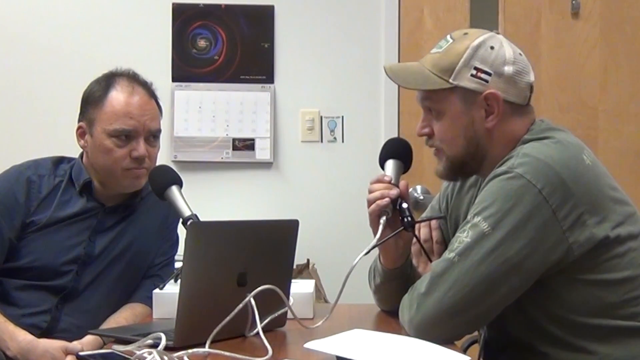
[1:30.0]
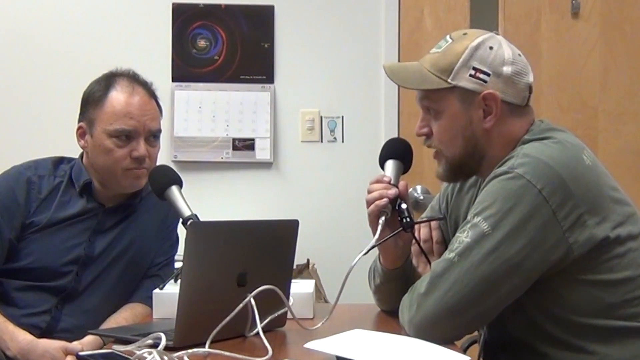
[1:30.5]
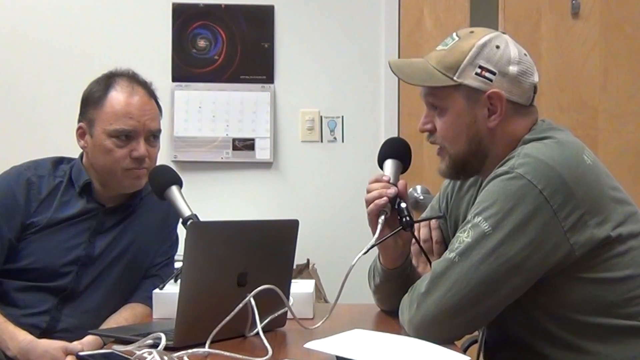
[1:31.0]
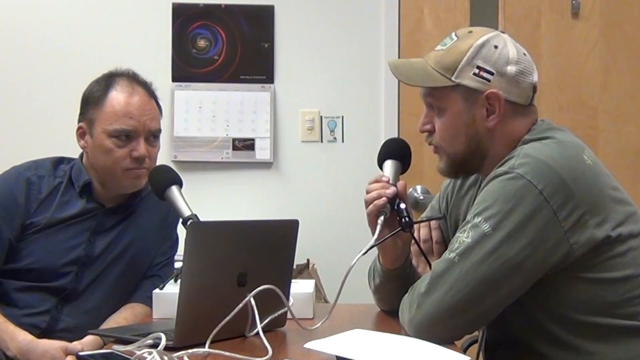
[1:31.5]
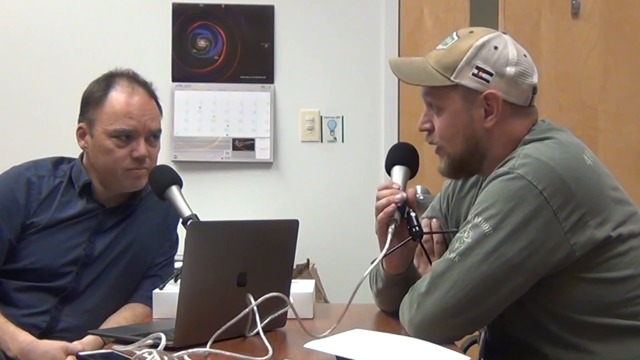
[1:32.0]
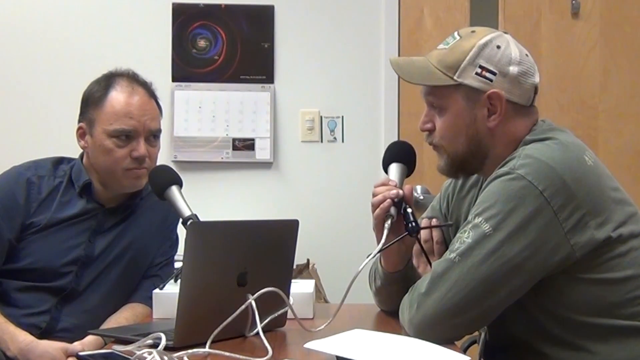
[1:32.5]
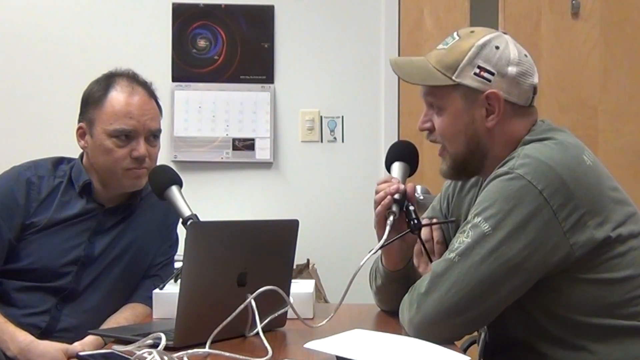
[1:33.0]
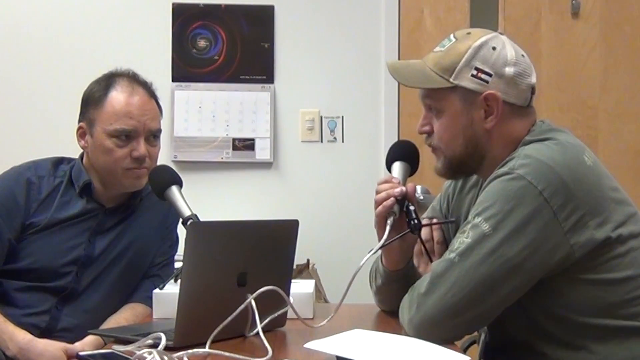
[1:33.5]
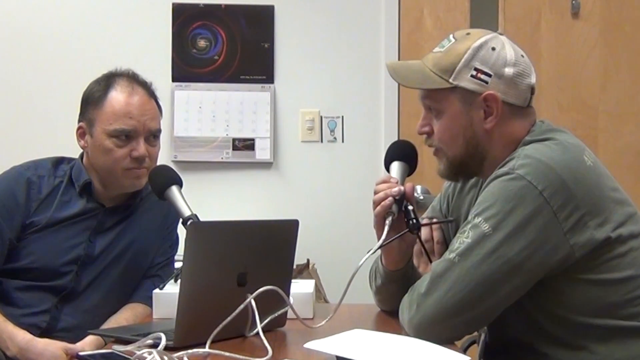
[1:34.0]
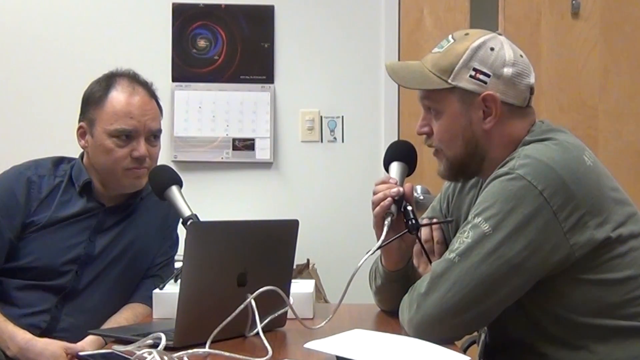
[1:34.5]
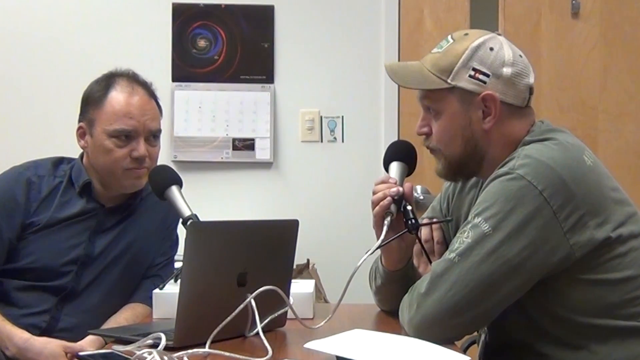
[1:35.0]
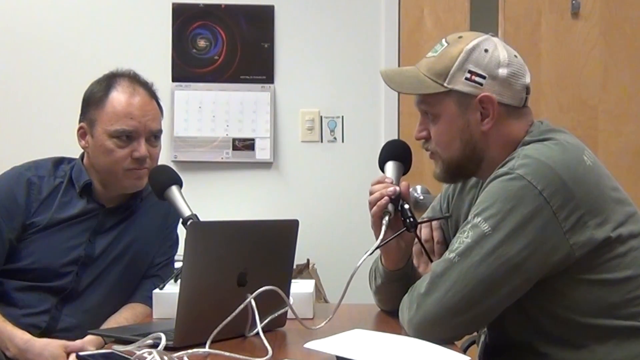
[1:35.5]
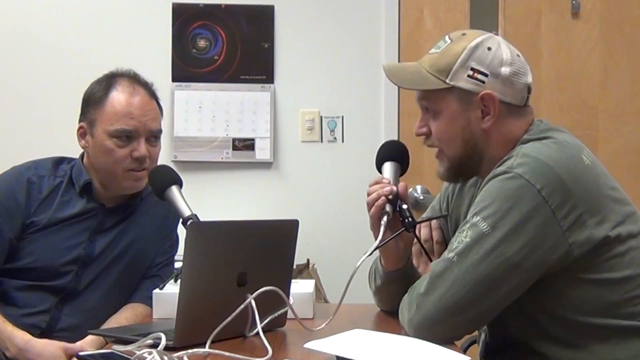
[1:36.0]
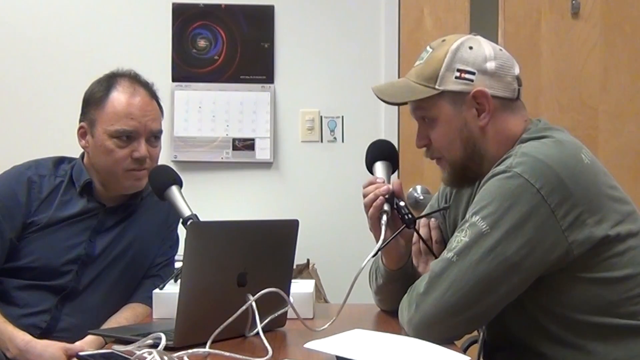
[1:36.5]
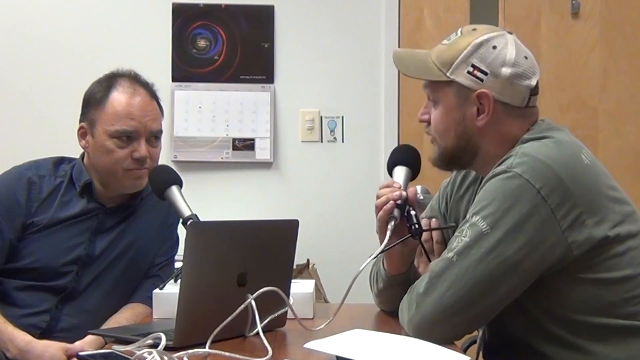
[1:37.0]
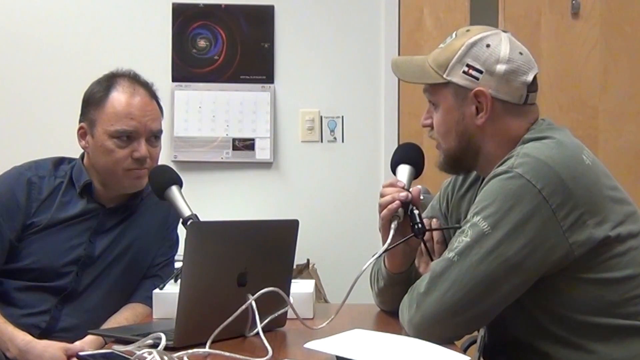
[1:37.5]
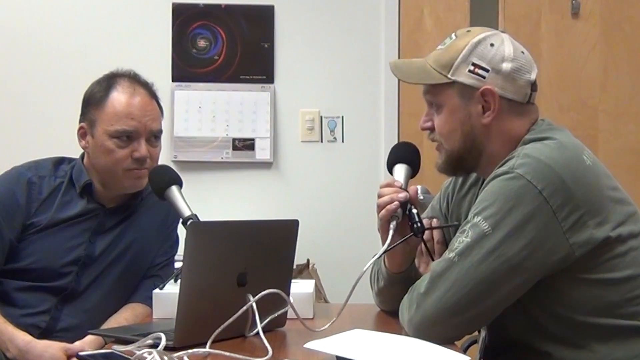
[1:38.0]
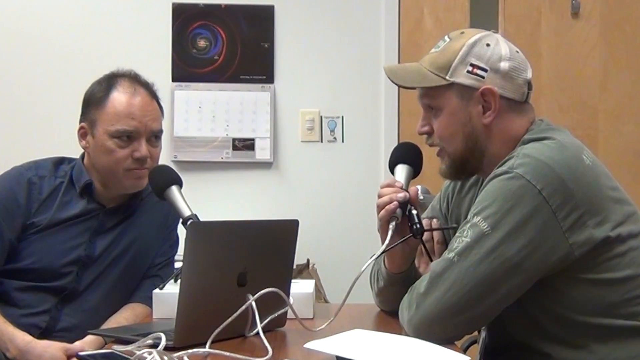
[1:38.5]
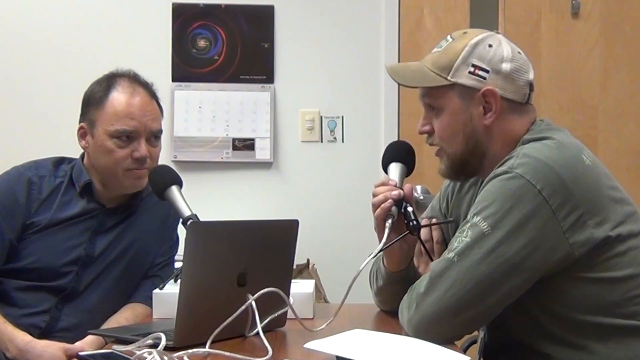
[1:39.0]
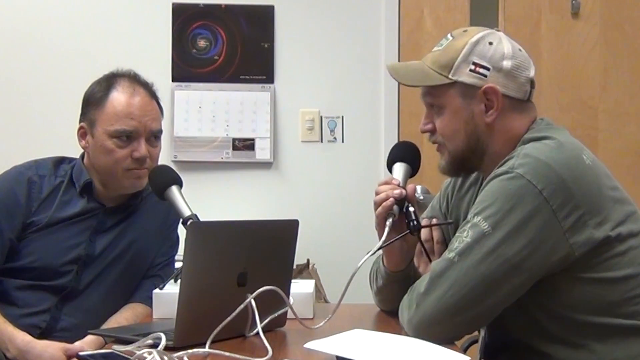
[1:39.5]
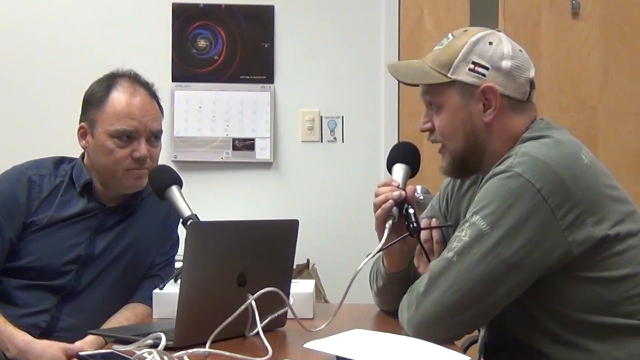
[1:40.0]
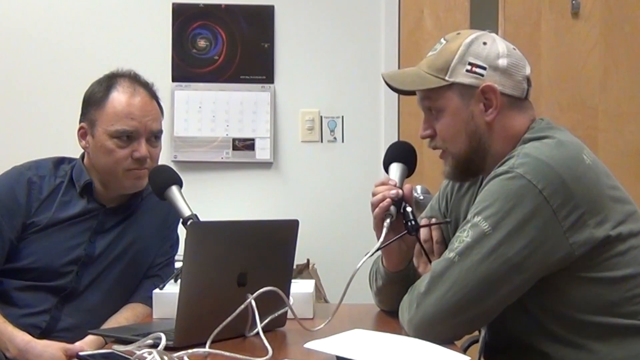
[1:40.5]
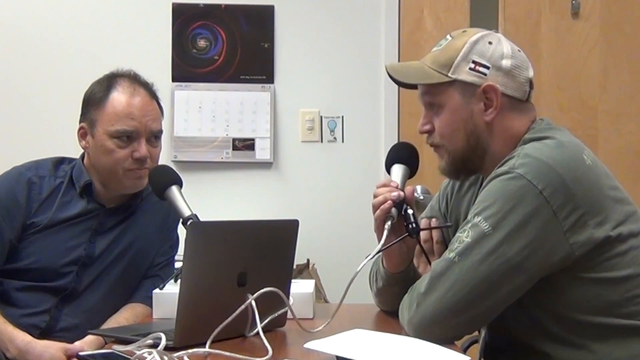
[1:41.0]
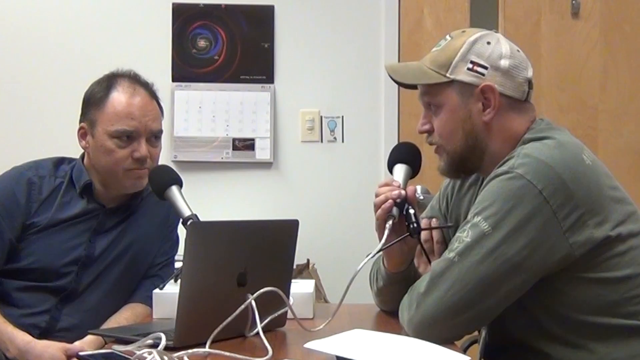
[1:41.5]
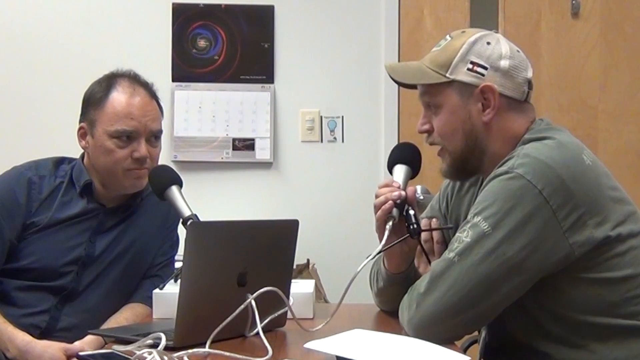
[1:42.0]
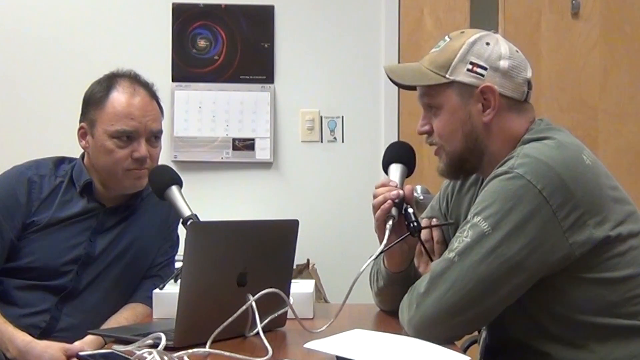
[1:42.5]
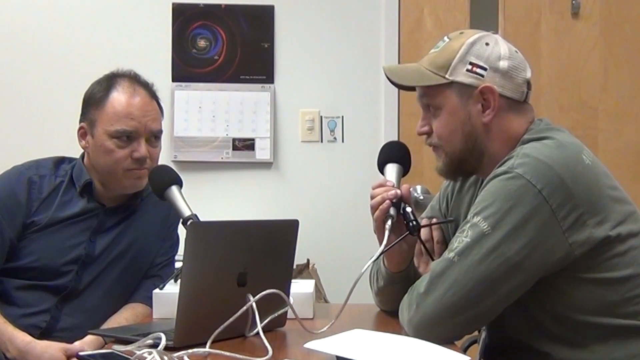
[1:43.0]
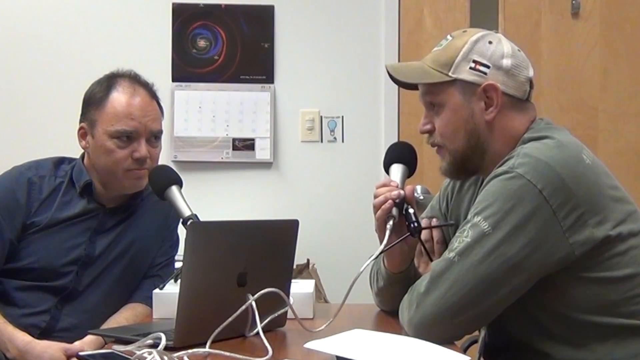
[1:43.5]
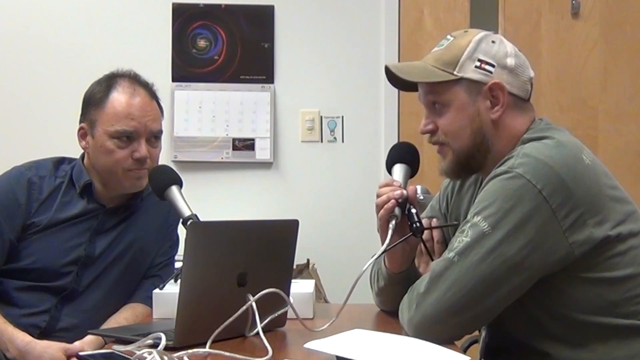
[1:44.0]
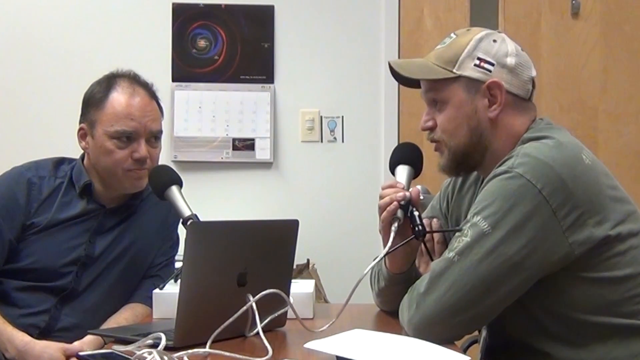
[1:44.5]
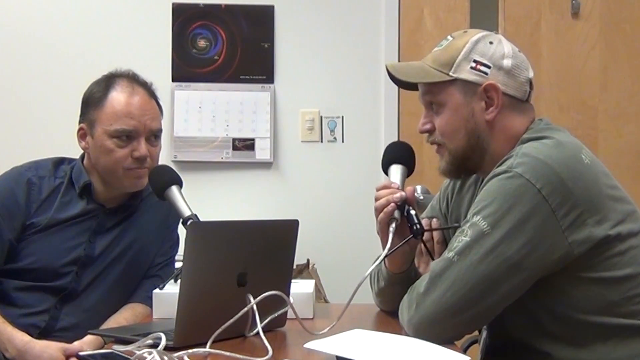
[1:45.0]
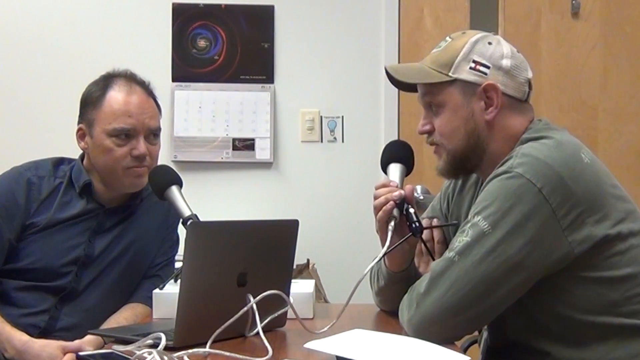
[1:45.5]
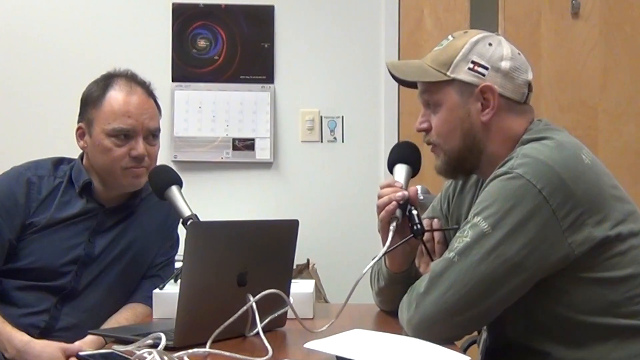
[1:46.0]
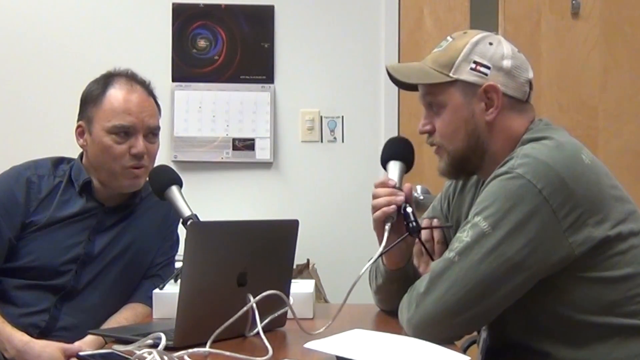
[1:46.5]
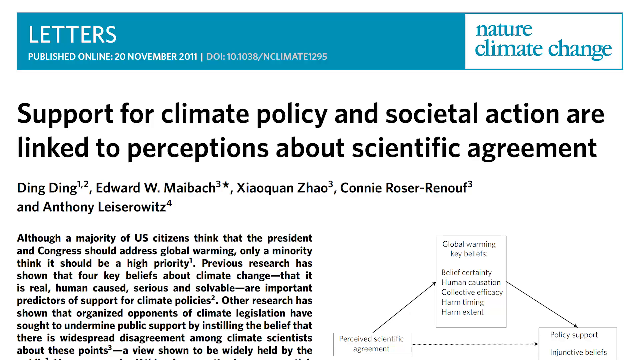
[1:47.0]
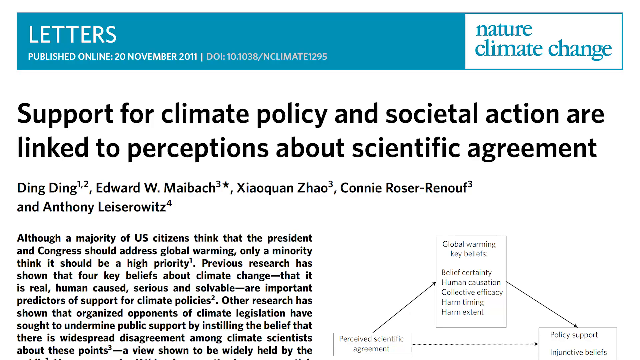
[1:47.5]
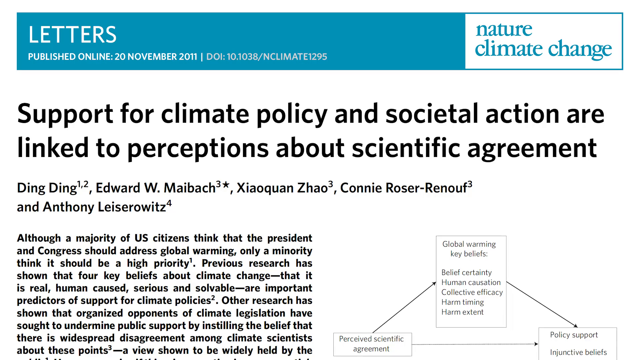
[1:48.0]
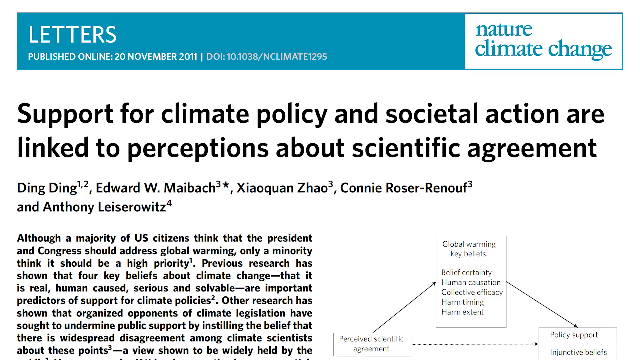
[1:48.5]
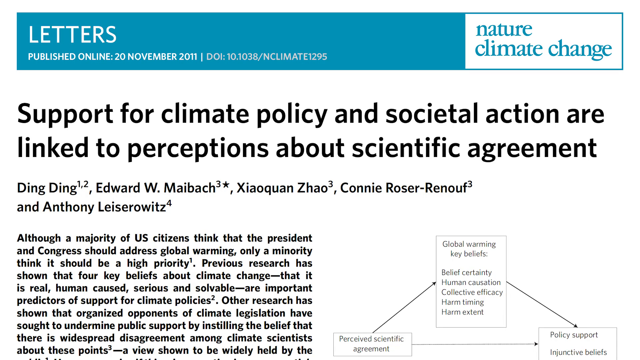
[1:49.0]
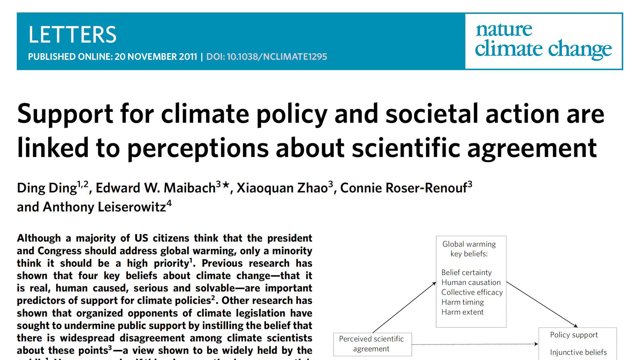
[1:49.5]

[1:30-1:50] On the left, a man in his mid to late 40s with receding dark hair, dark eyes, and a blue button-down shirt has a microphone and an open laptop in front of him. The man on the viewer's right is a little younger, in his late 20s, maybe early 30s, wearing a brown and white baseball cap and a long-sleeved green shirt; he holds his microphone in his right hand, has brown hair, a mustache, and a beard, and is speaking into the microphone. Behind them is an off-white wall with a calendar whose top part looks to show outer space; the dates cannot be read.